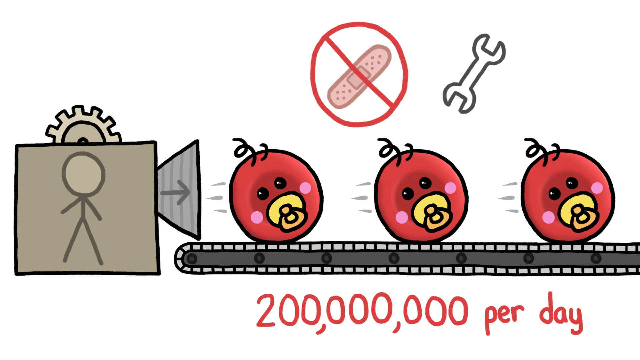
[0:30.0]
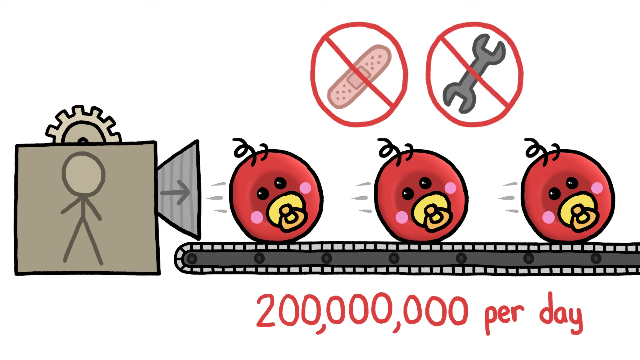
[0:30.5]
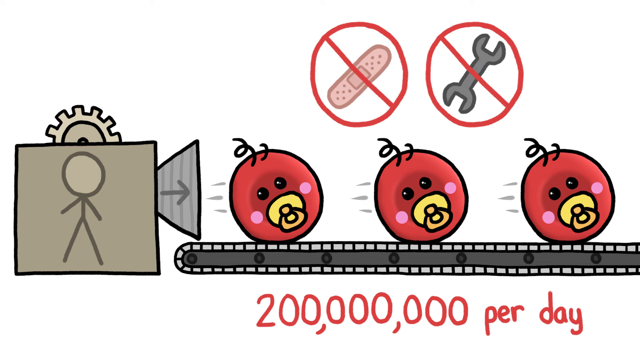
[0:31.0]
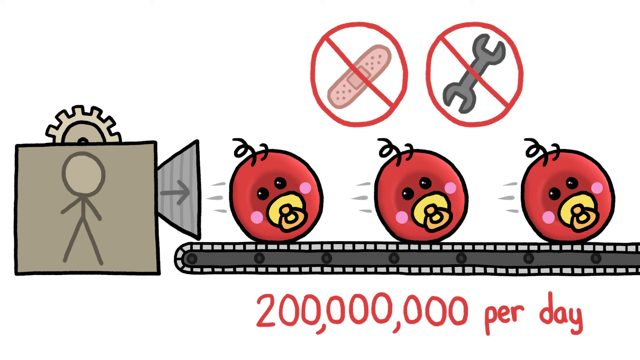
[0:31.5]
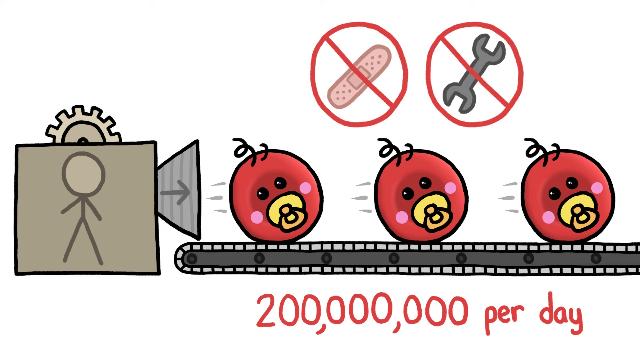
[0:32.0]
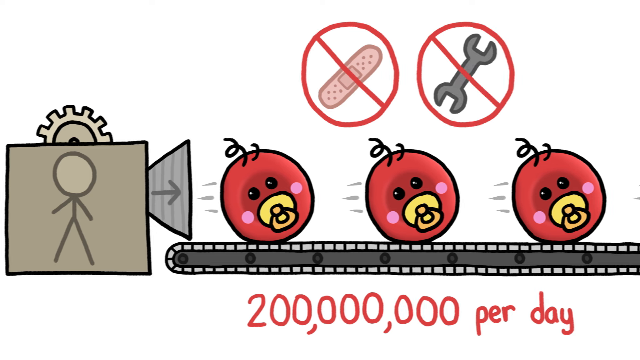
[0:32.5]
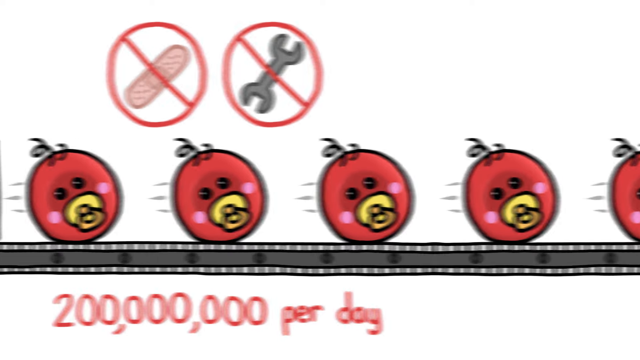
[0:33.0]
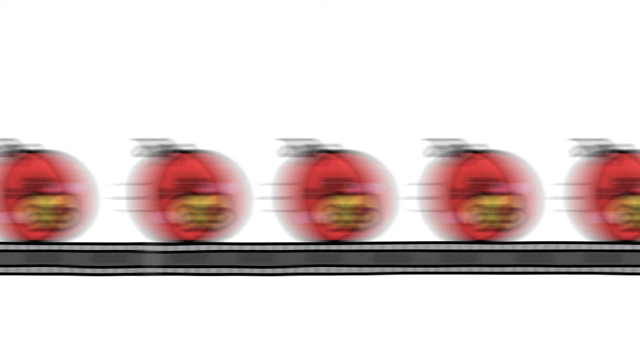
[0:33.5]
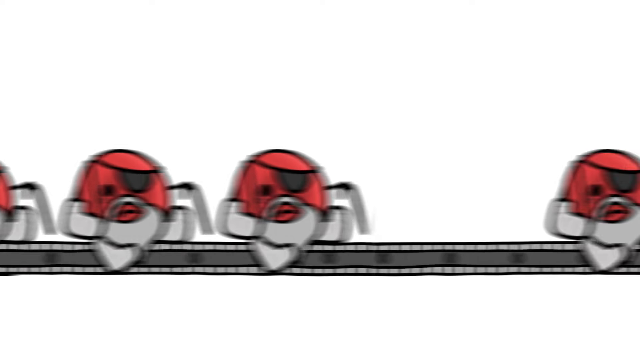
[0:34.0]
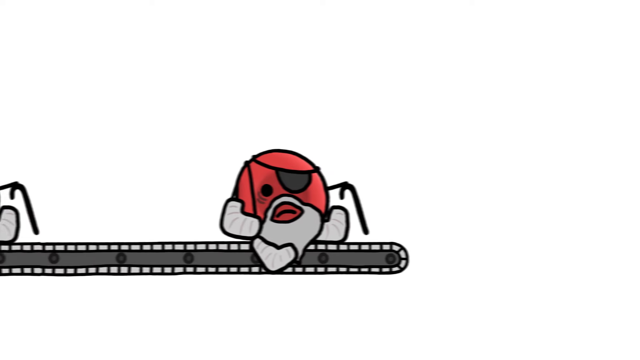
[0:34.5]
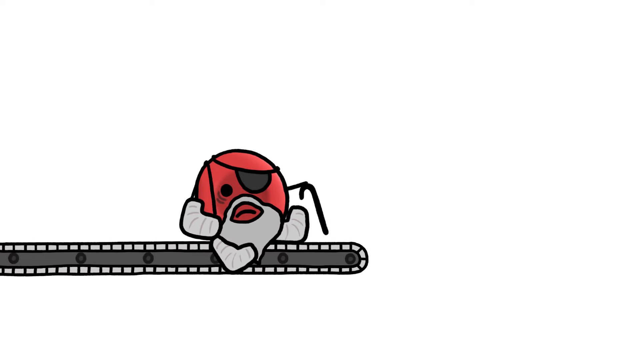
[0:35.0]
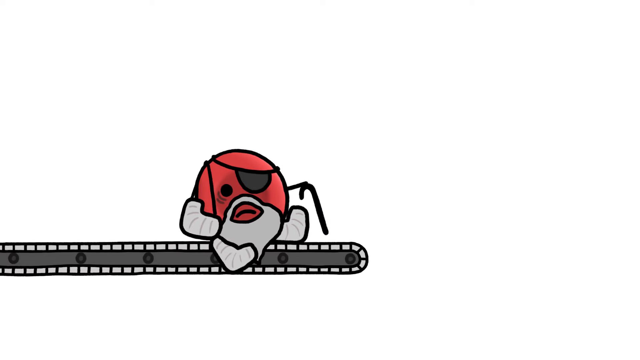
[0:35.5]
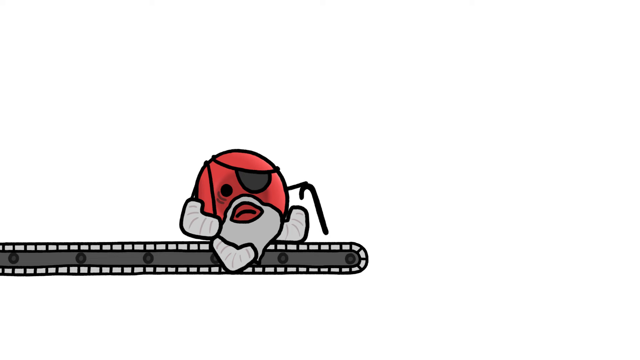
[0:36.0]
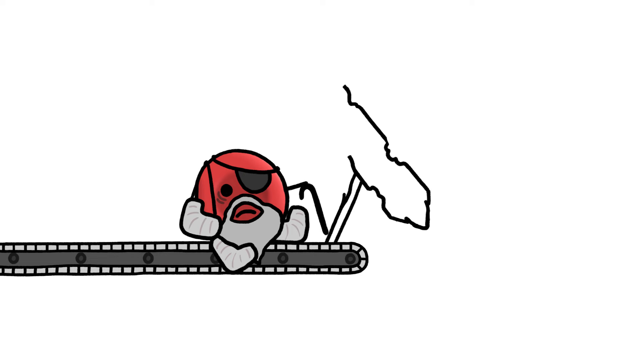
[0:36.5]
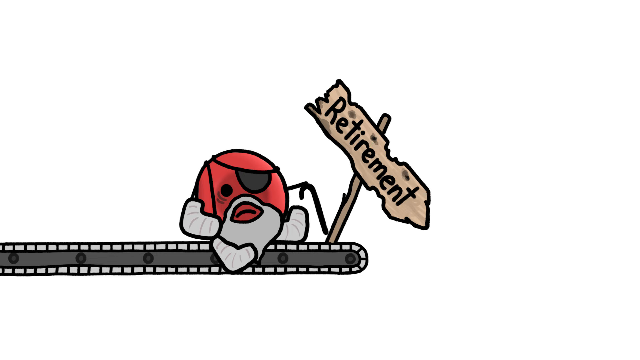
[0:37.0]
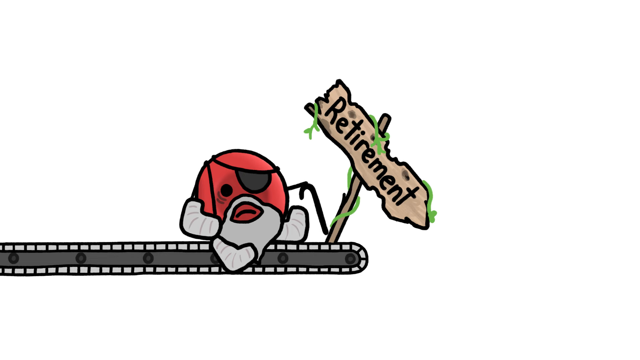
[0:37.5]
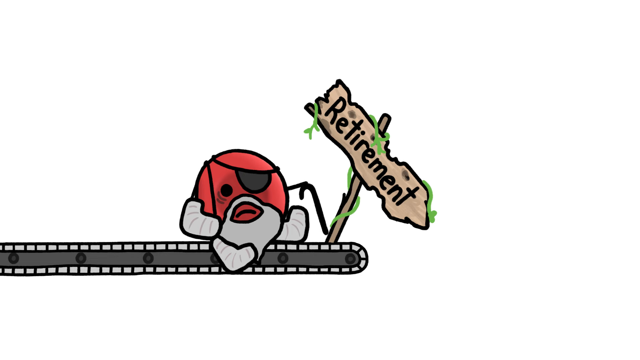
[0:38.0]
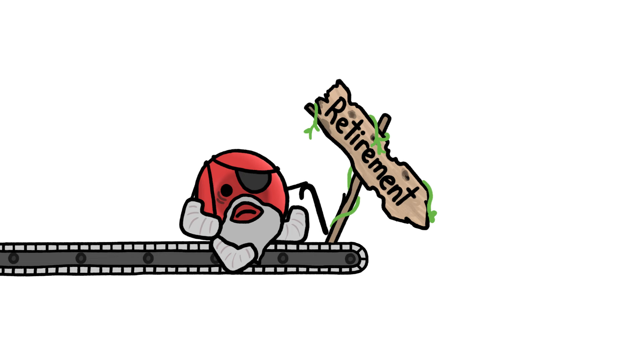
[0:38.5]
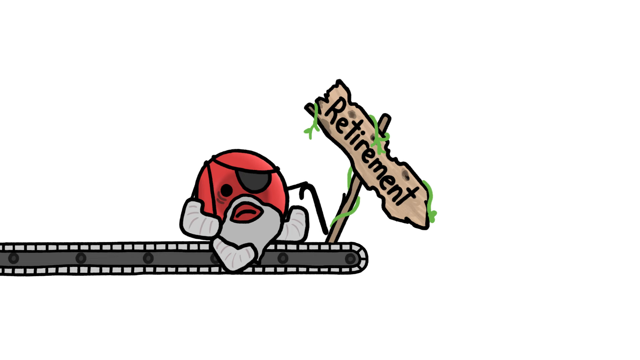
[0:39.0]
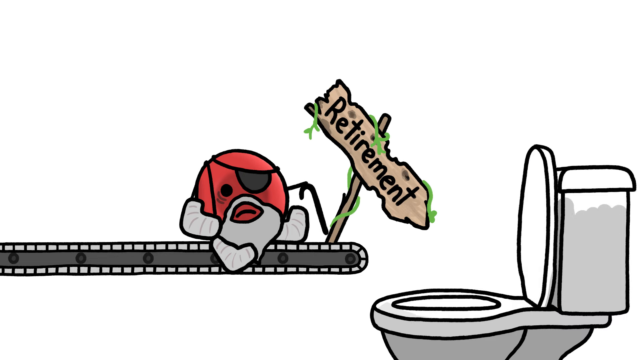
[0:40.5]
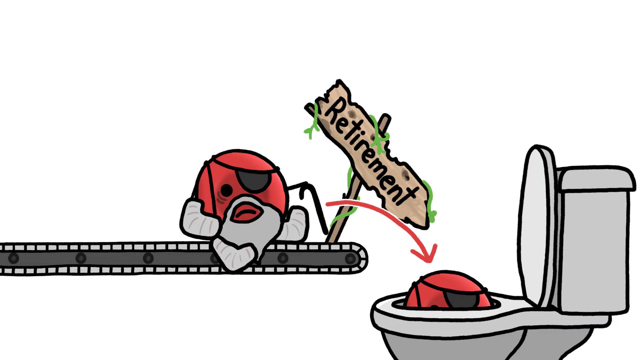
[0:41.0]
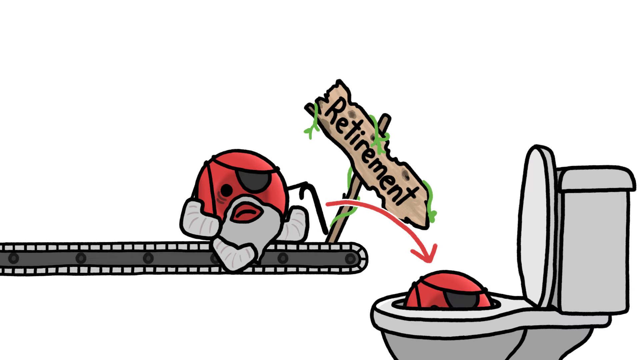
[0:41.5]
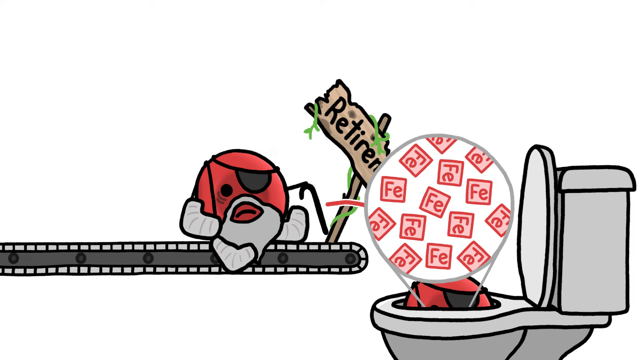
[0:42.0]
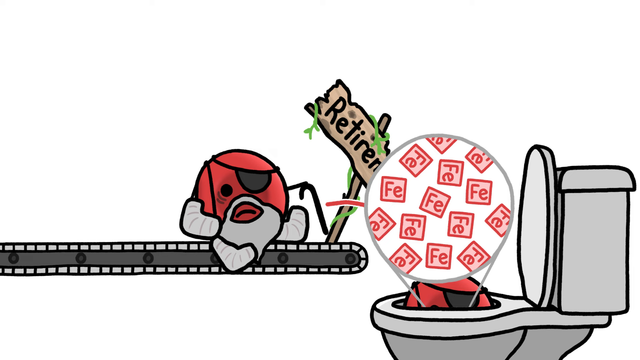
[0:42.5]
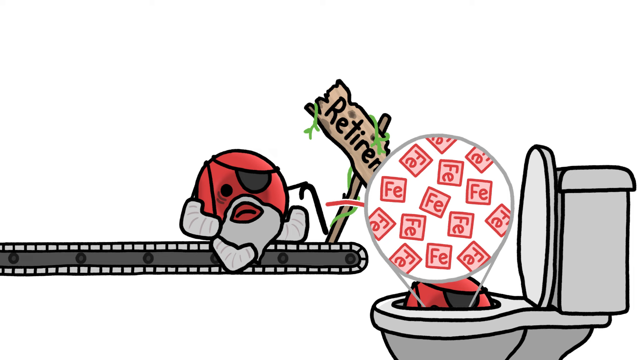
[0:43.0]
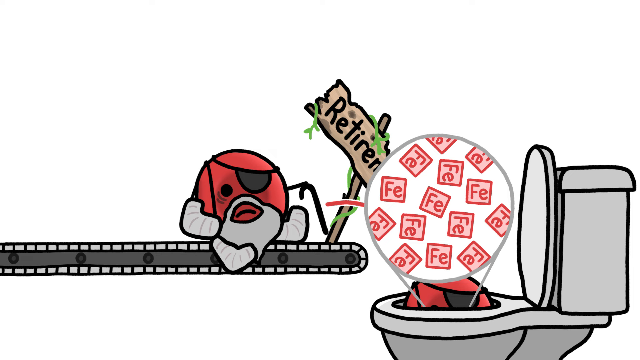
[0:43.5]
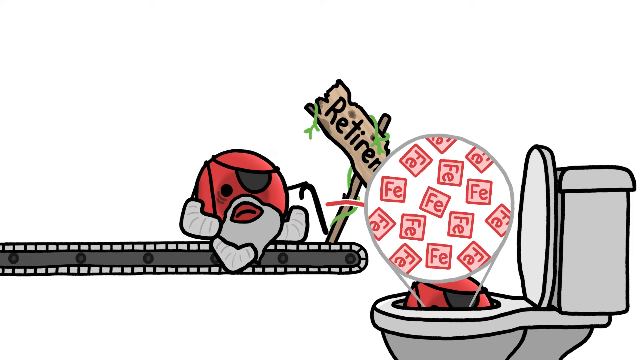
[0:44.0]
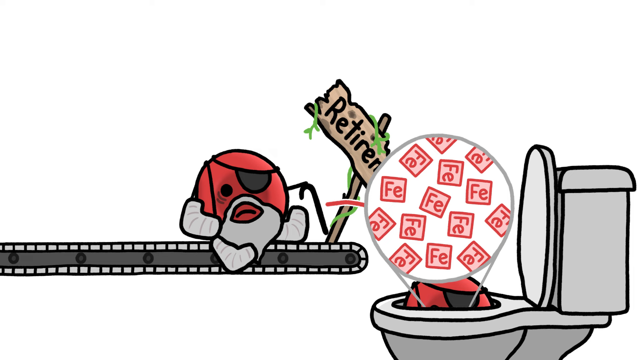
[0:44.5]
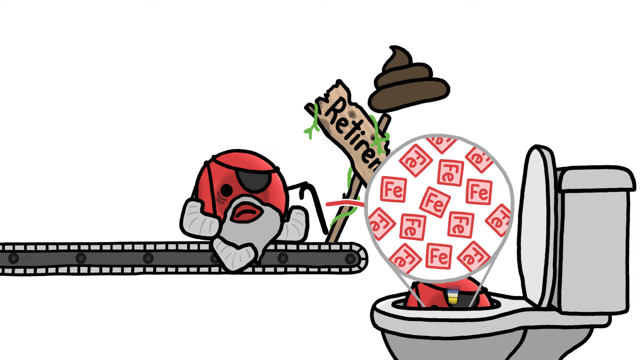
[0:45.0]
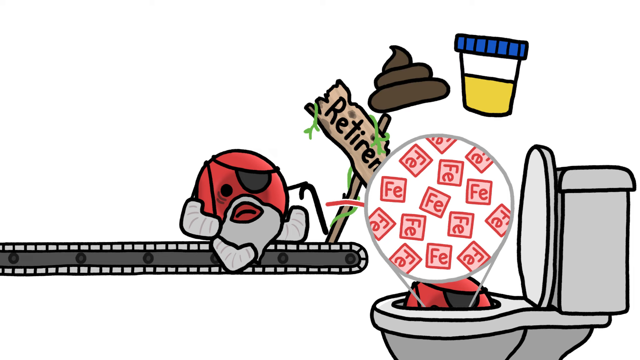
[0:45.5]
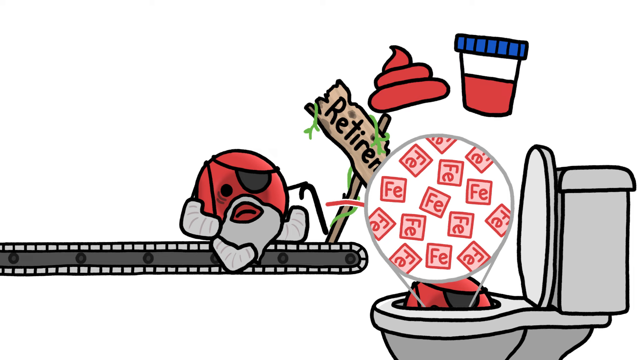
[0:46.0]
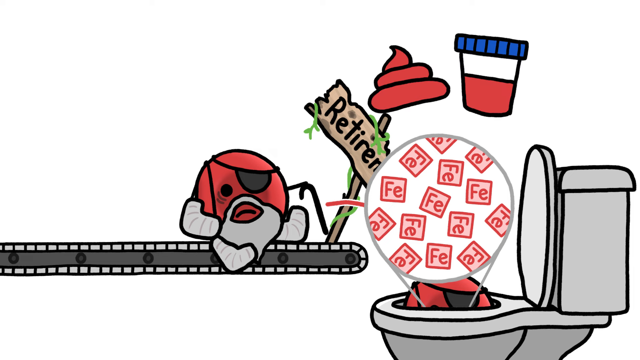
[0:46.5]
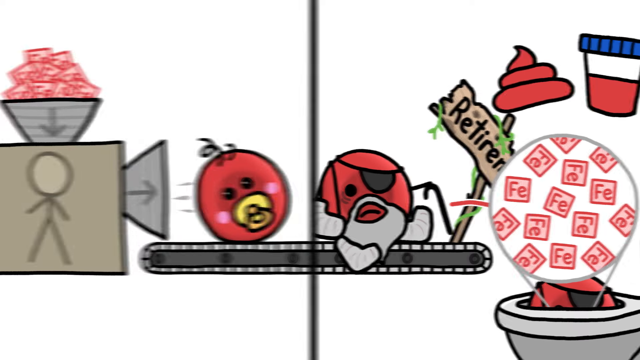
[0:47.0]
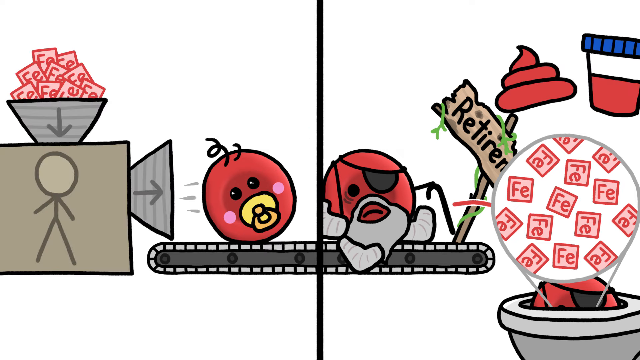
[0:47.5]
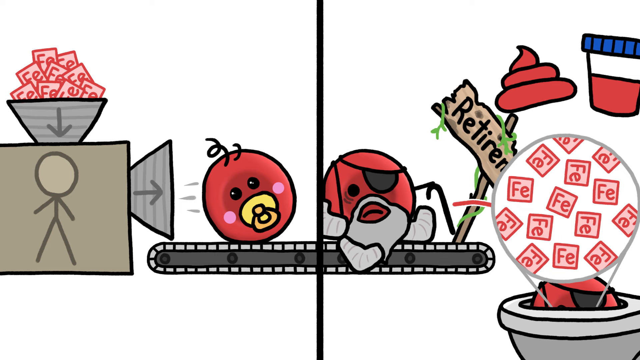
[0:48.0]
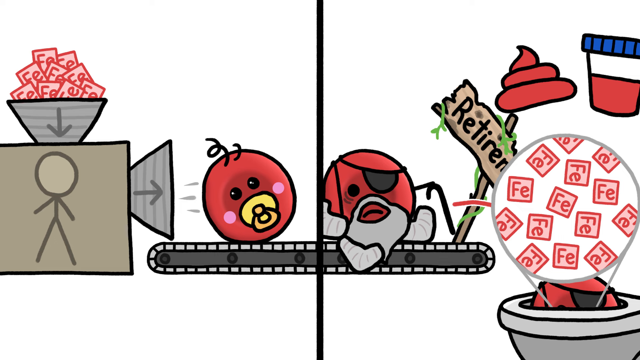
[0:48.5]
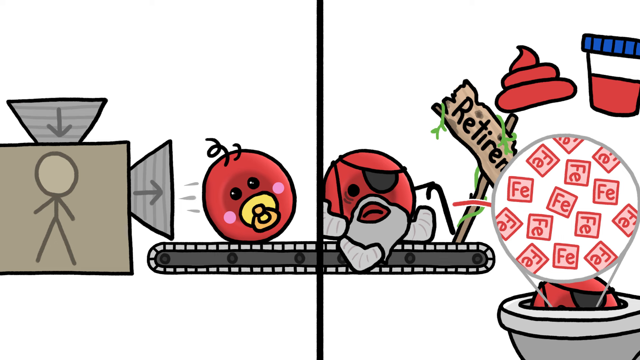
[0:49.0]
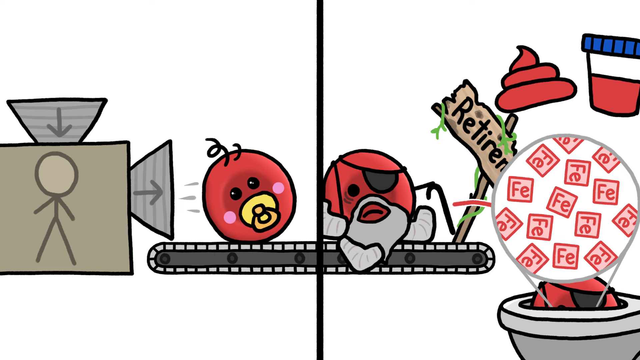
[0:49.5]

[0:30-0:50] The camera points towards the conveyor belt and the berries on it, with a band-aid marked with a do-not-use sign above them and, to the right, a spanner that also has a do-not-use sign. Underneath is the text "200 million per day". The berries speed along the production line and gradually change, eventually having eye patches, grey beards and bandages on their limbs. At the end of the conveyor belt a sign comes up reading "retirement", pointing downwards. A toilet appears on the right of the screen and a berry goes into it. A circle comes up from the toilet containing little squares with "F A" inside them. A poo and a test cup with "P" inside it come out of the toilet, and both turn red. The screen then splits in half from the left, showing the start of the conveyor belt with the person, what looks like a camera, and a berry coming out of it; at the top, instead of the cog, the little squares with "F A" are being fed into the box. They then disappear.